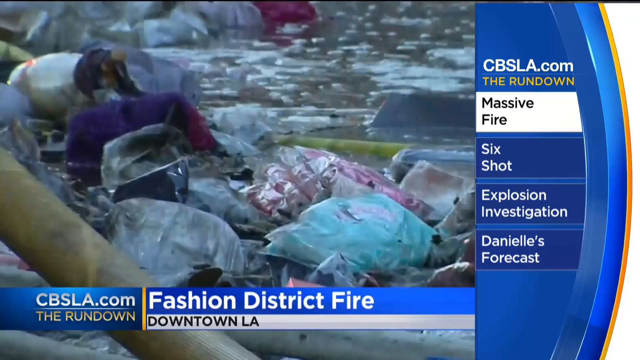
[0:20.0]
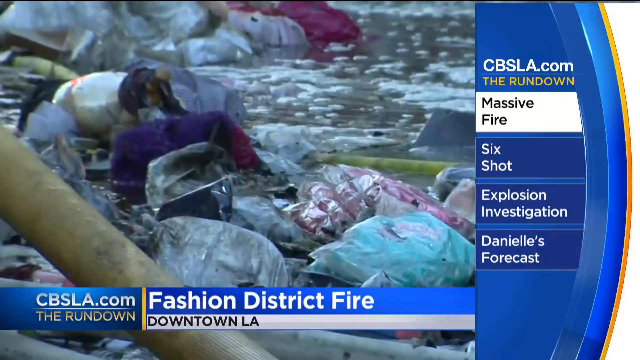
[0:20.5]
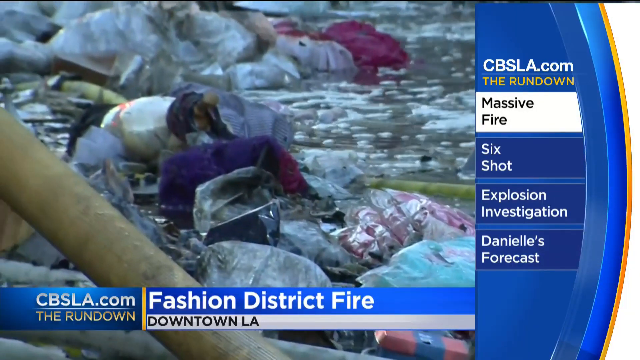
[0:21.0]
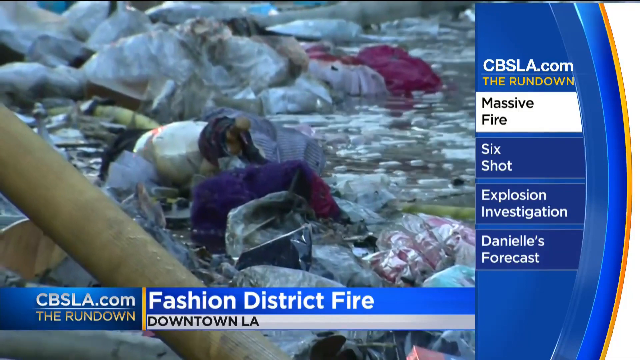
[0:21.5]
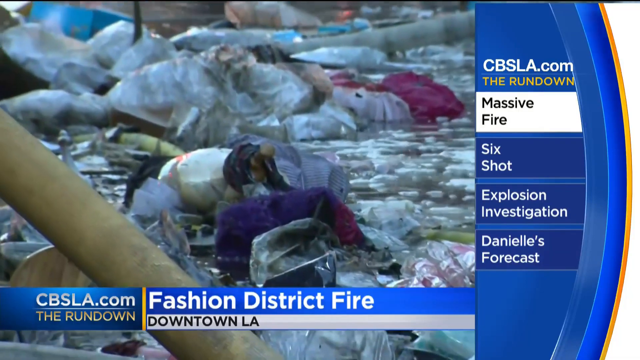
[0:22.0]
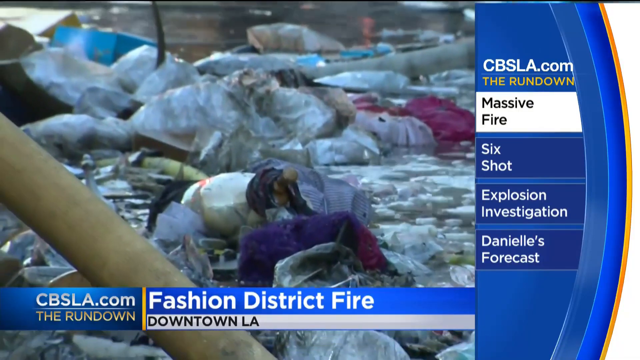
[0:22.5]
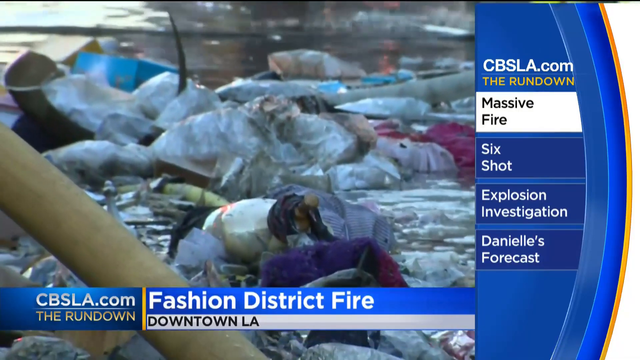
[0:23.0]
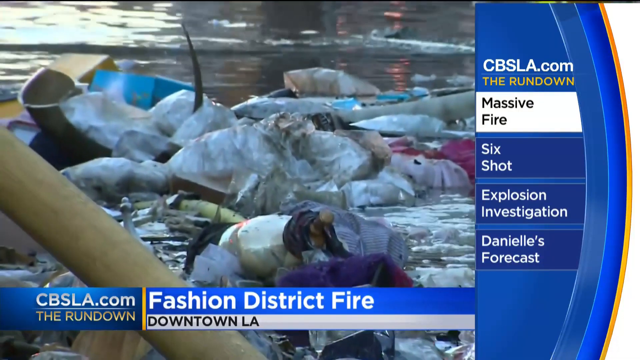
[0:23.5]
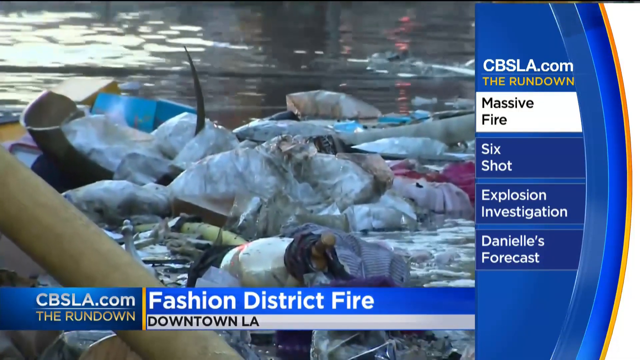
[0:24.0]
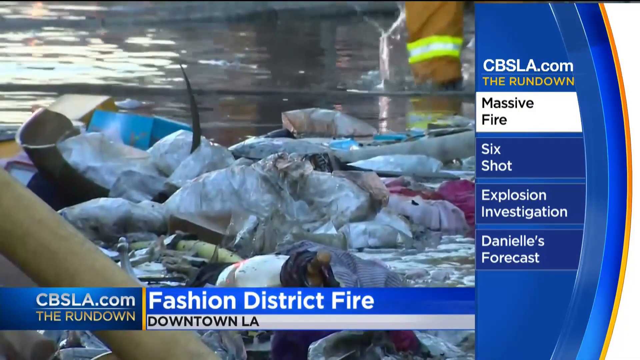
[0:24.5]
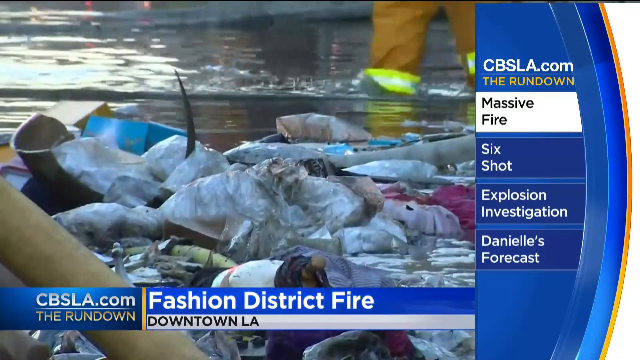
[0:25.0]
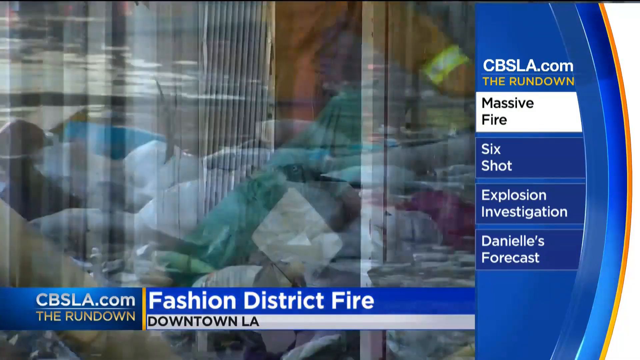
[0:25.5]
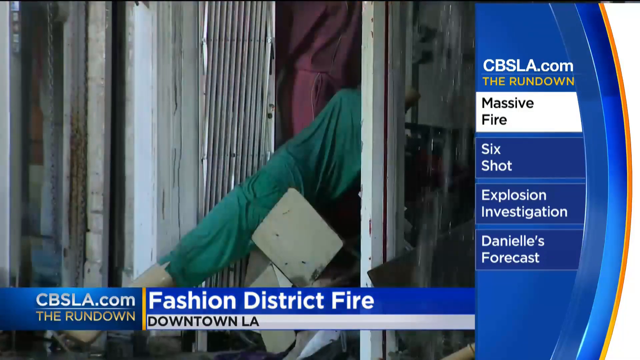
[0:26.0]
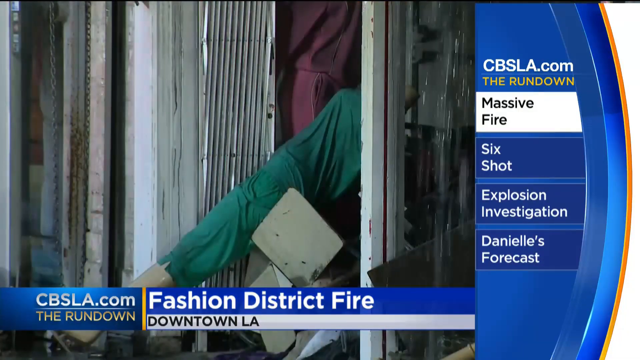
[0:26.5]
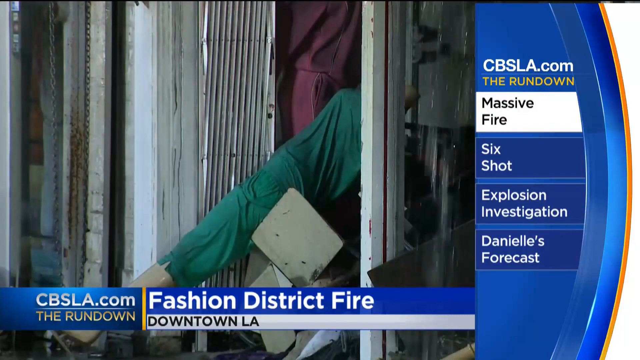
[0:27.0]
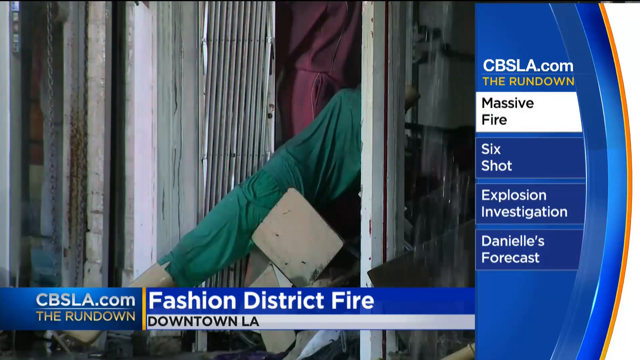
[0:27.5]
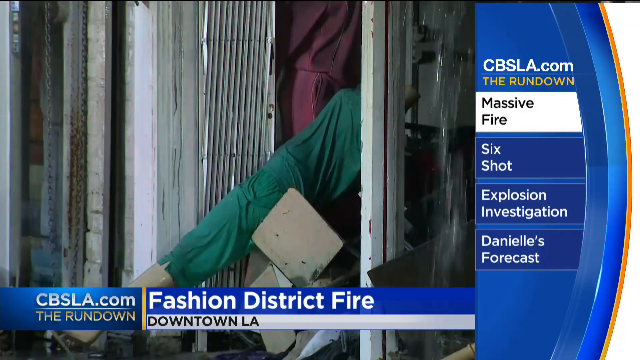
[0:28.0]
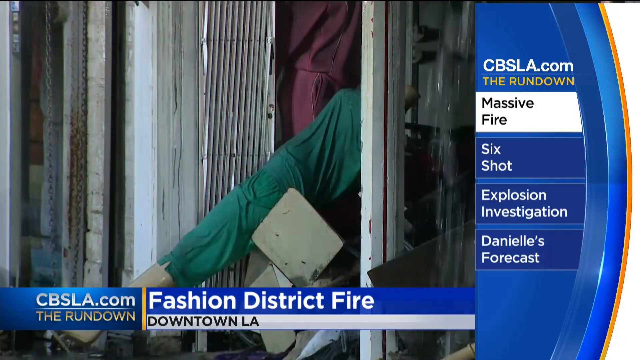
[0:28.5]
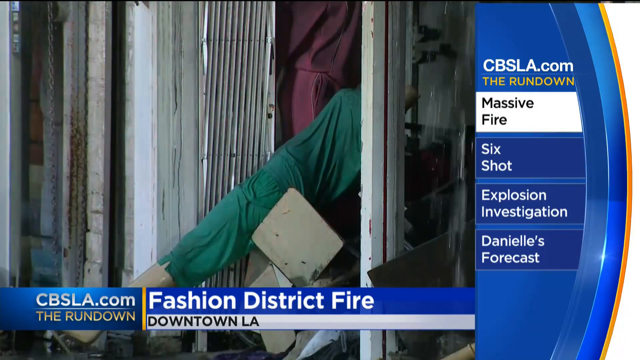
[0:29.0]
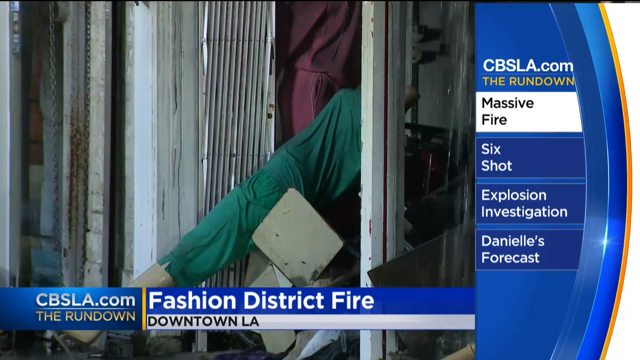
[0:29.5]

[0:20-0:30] Sticks are everywhere, and there seems to be water everywhere on the ground along with fabric. The fire seems to have stopped, leaving damage behind: clothing and garments that are damaged by the fire or wet from the water.